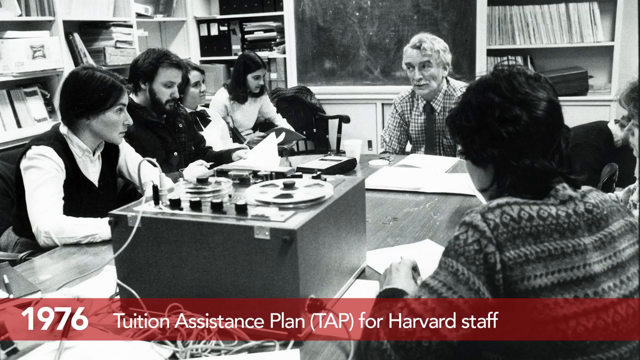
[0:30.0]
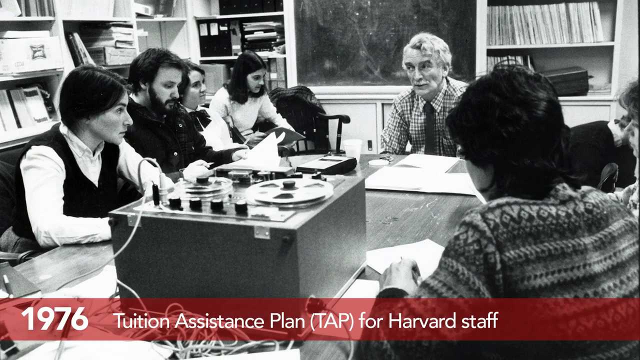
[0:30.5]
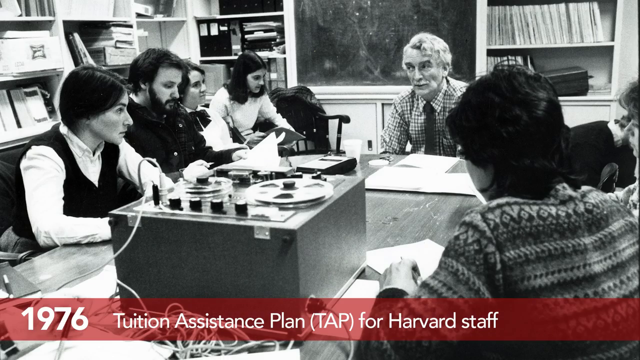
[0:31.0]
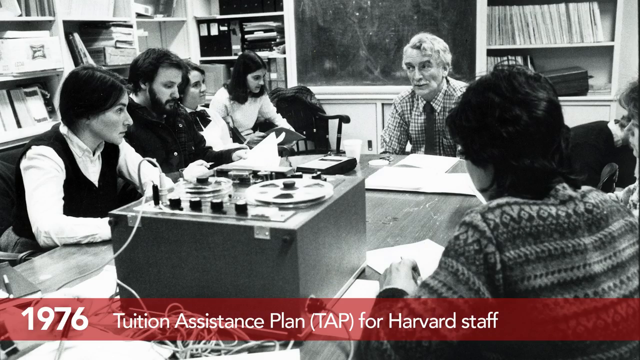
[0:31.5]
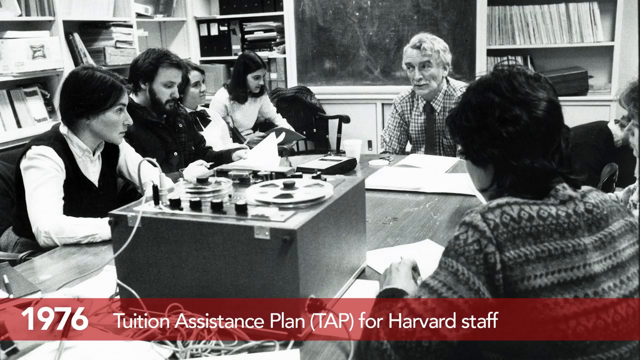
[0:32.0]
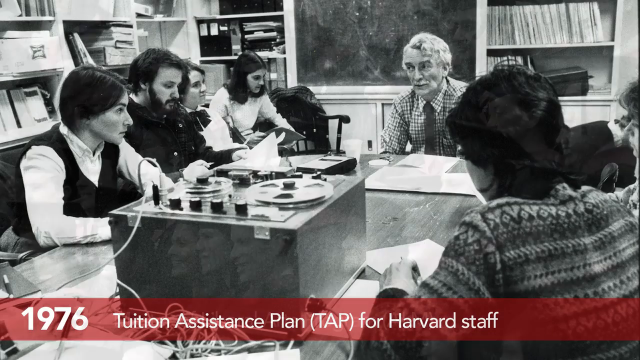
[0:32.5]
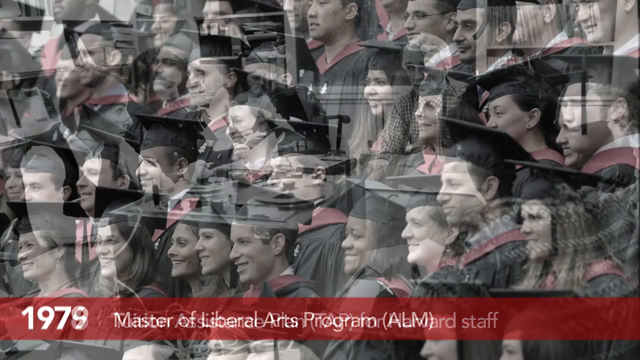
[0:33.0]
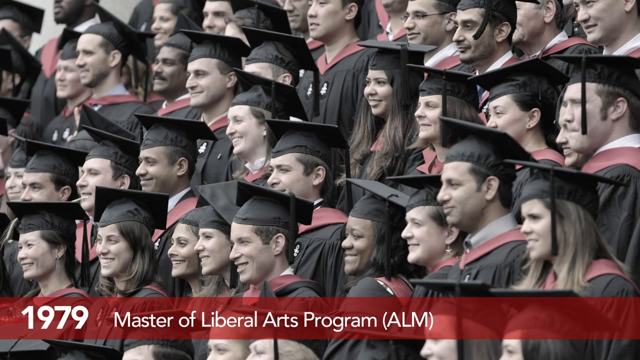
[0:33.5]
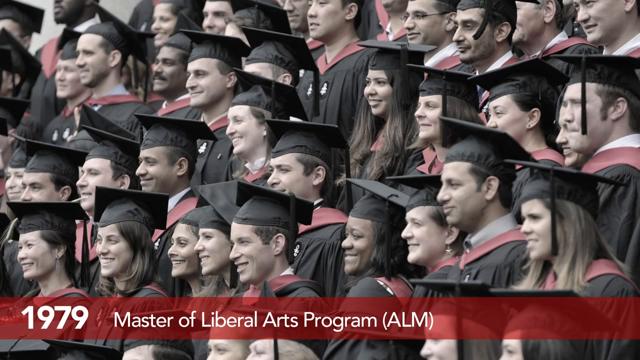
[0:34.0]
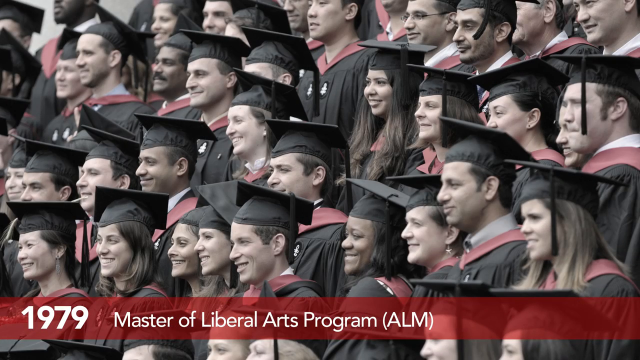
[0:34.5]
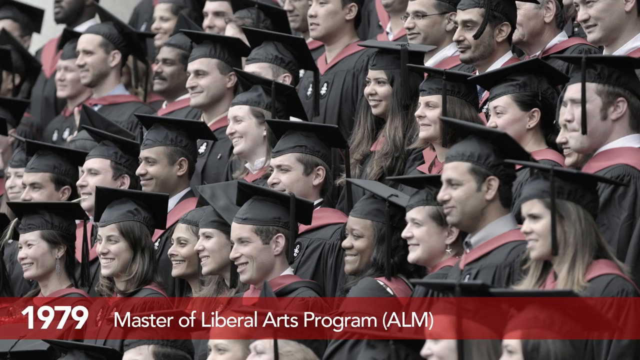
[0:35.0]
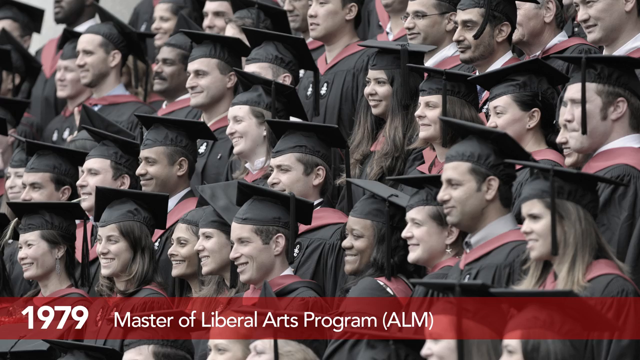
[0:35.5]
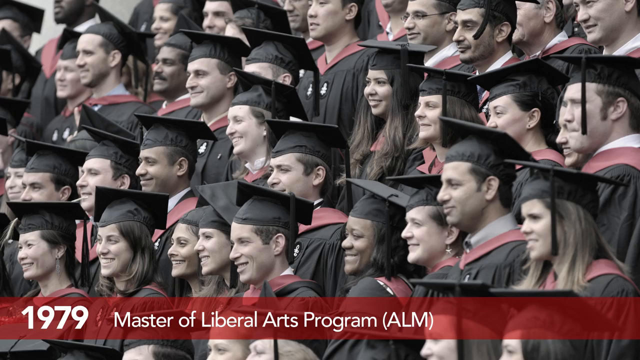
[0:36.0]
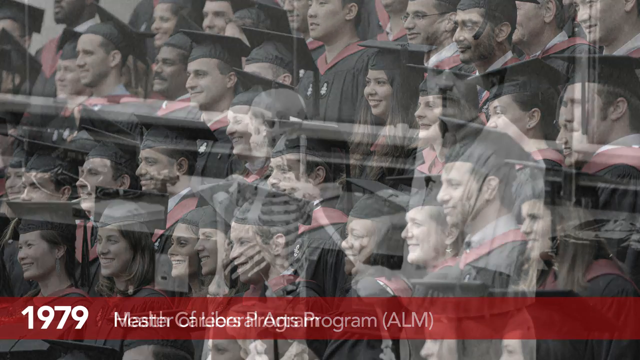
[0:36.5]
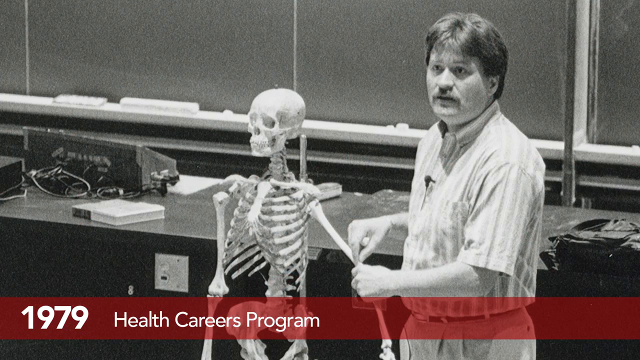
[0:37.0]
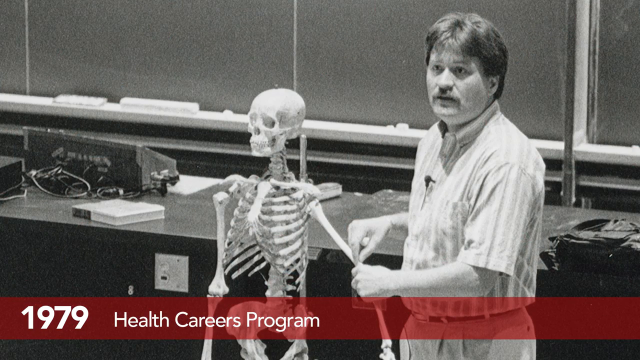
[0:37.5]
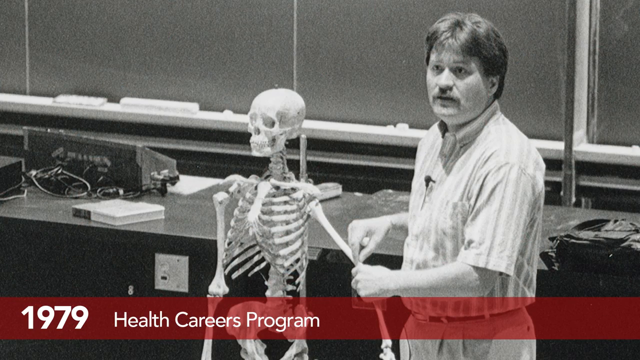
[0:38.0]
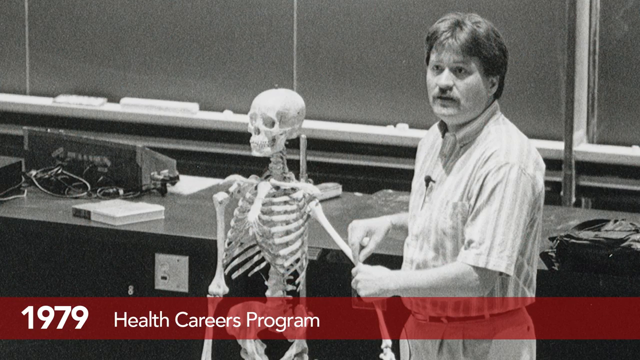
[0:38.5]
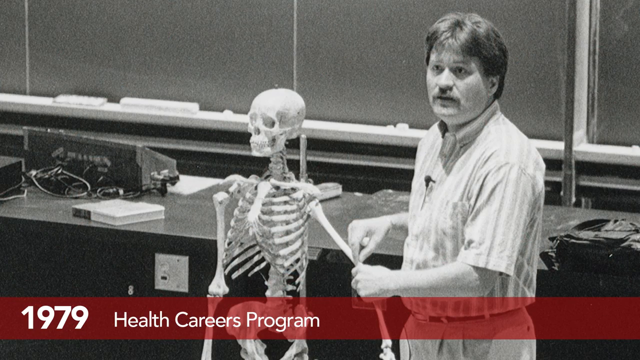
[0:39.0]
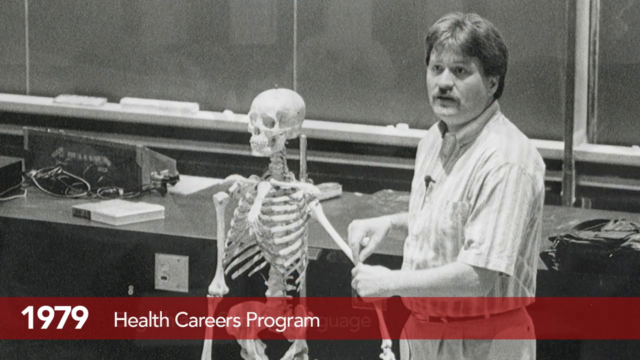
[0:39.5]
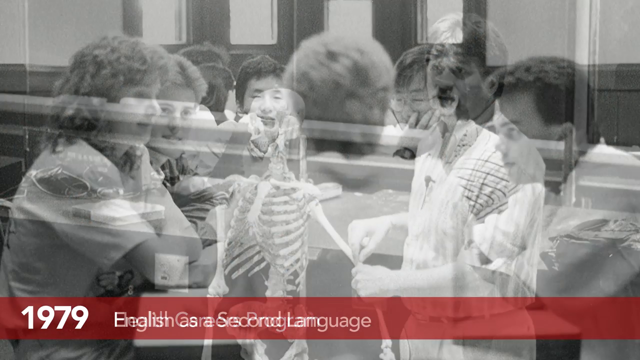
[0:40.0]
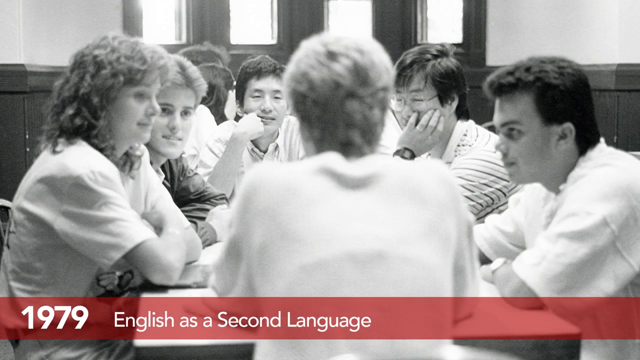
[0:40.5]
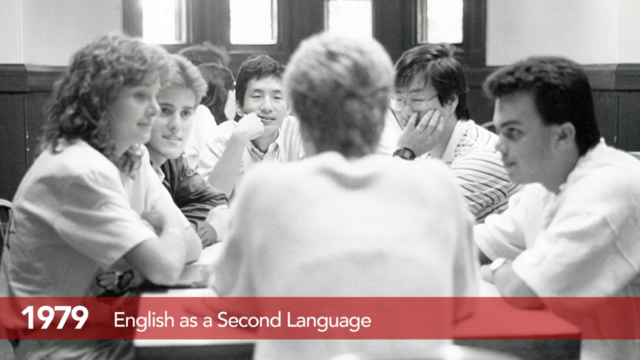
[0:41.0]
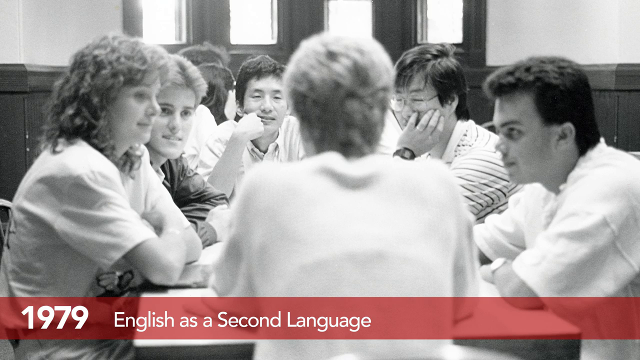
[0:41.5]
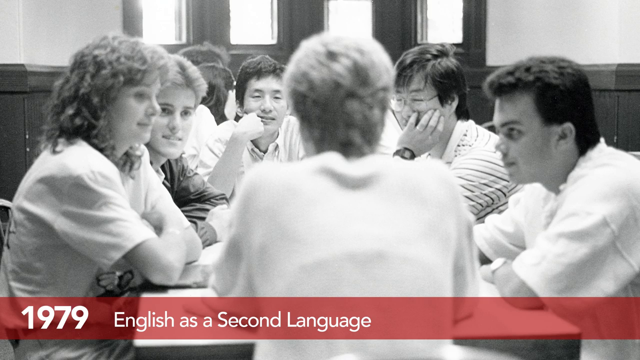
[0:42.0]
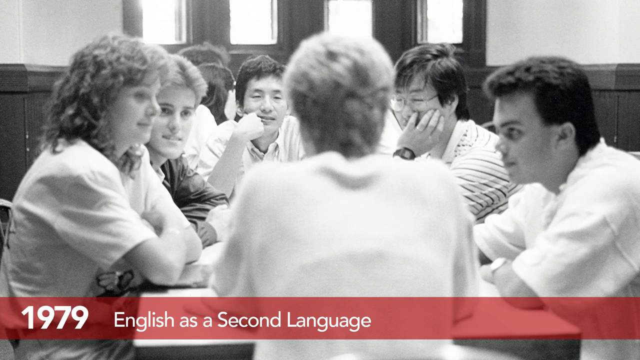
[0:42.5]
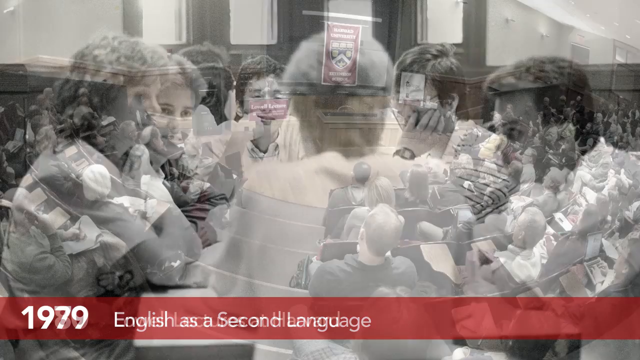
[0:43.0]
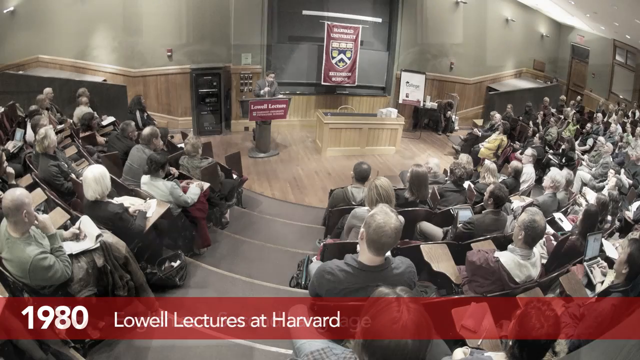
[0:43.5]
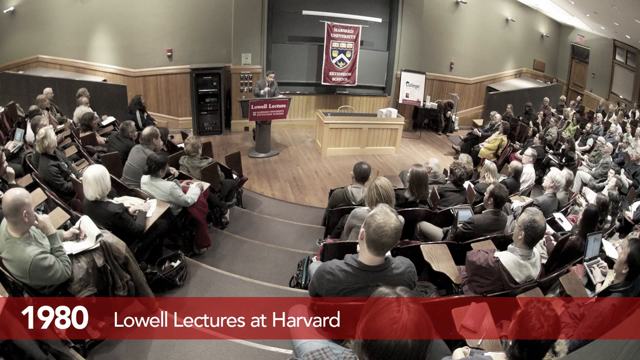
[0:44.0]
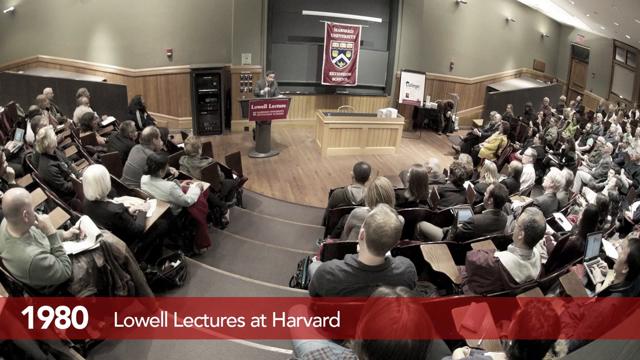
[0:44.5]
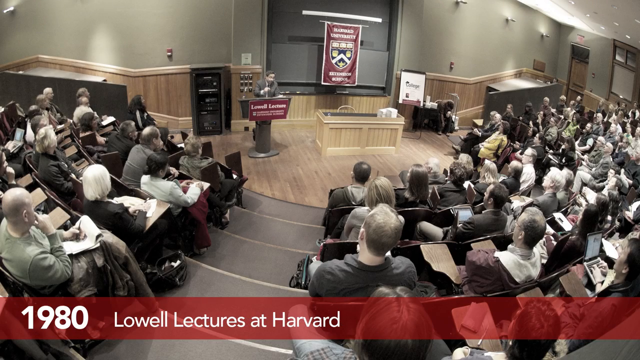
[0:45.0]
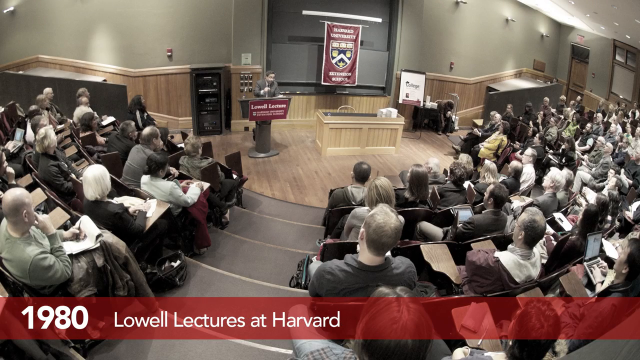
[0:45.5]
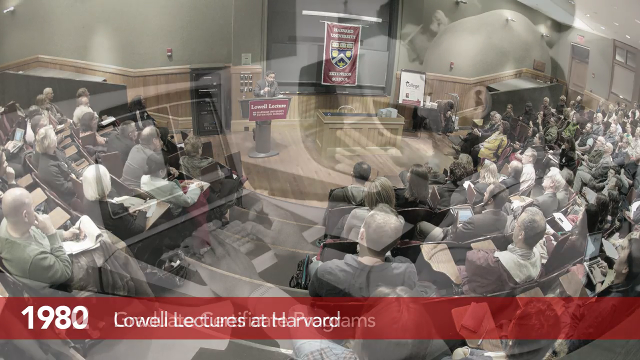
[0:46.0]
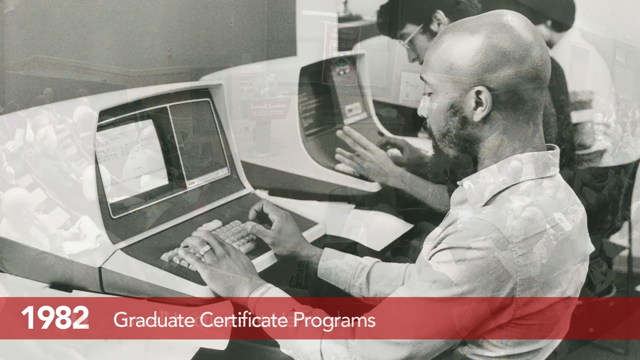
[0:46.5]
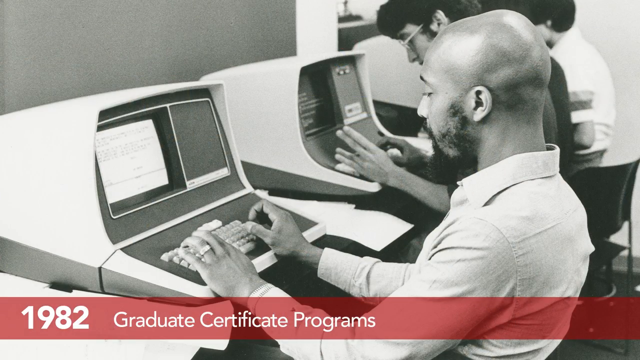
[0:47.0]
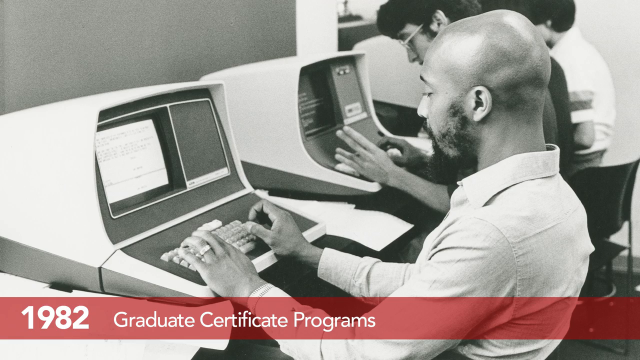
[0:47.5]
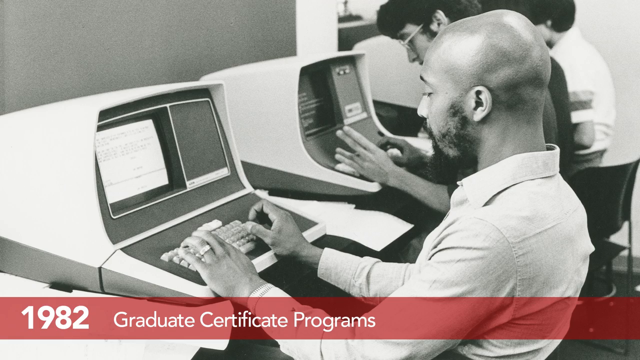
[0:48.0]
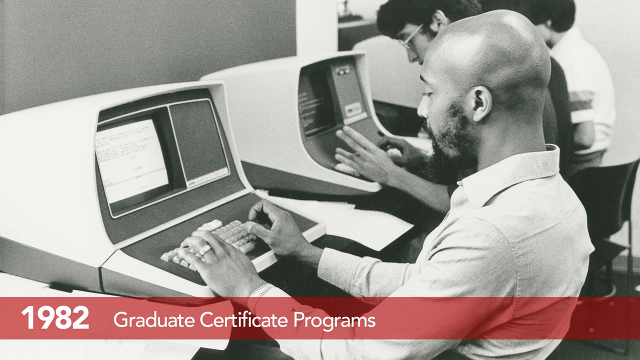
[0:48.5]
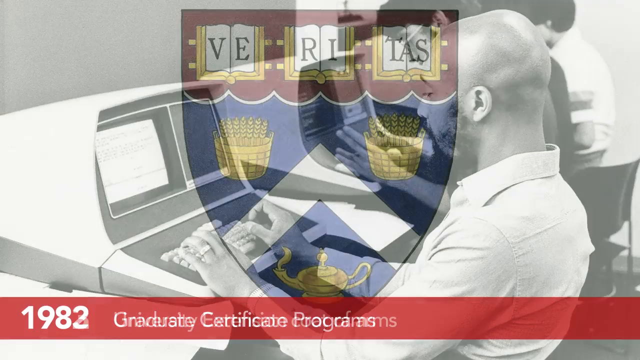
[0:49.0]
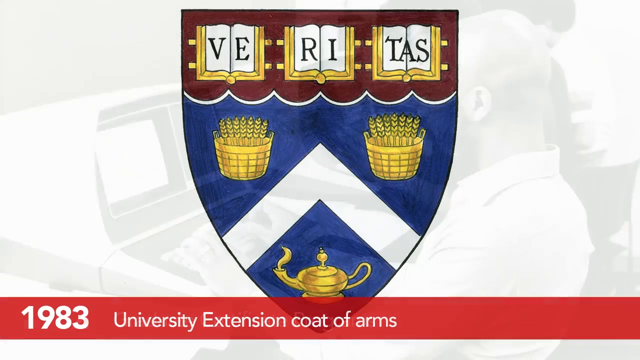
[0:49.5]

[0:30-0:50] People sit around a table. There is a flyer containing a paper with text including "1976" and "TAP, for Harvard staff." The group has about four women and four men altogether. Behind them are shelves of books; one shelf is properly packed and the other is a bit messed up. They seem to be having a discussion. Next, a large group of students wears black graduation gowns with red collars, and text reads "1979 Master of Liberal Arts program." A lecturer then stands next to a skeleton; only the upper part of both the man and the skeleton is visible. It looks like a lecture hall, with equipment for speaking in the room, and he looks like someone teaching a class.